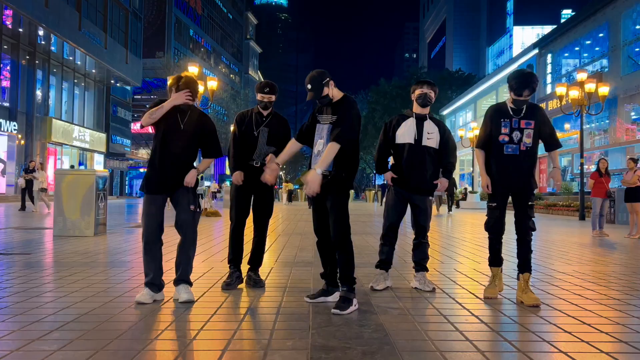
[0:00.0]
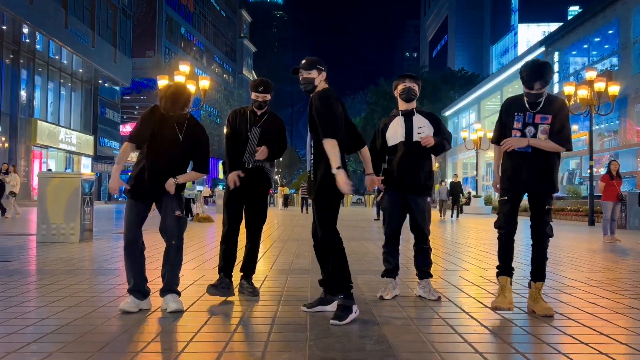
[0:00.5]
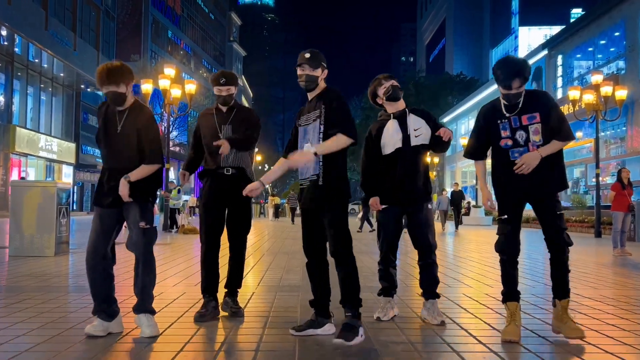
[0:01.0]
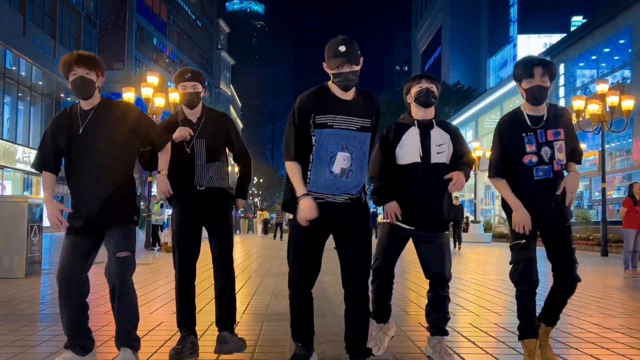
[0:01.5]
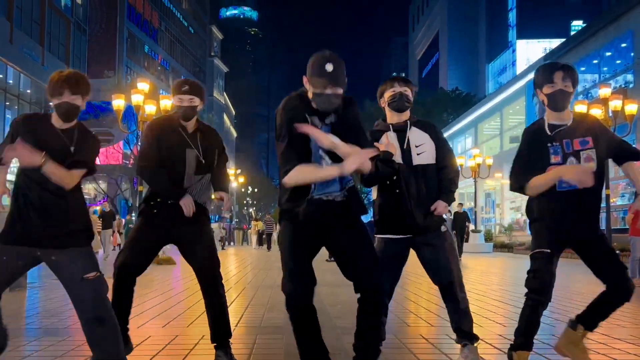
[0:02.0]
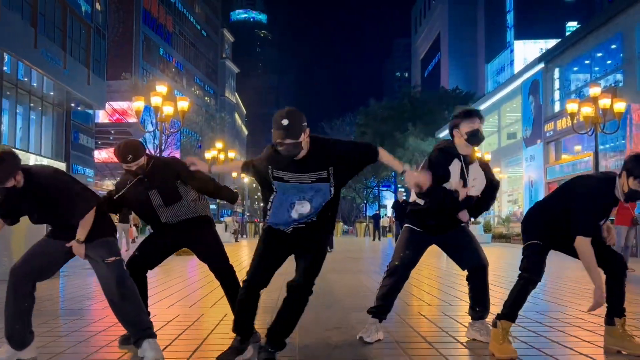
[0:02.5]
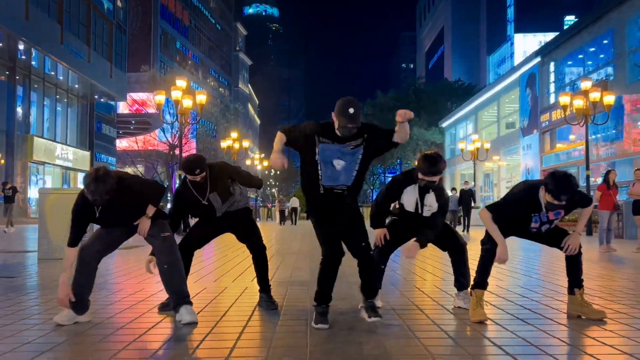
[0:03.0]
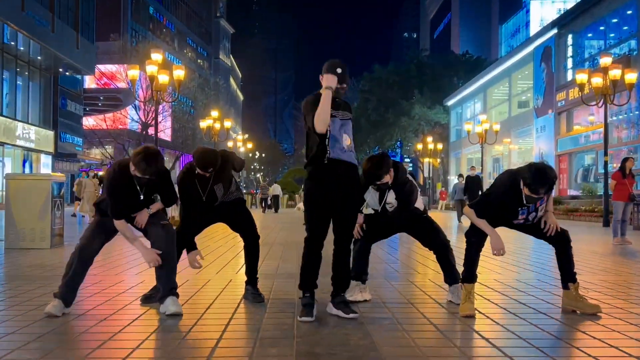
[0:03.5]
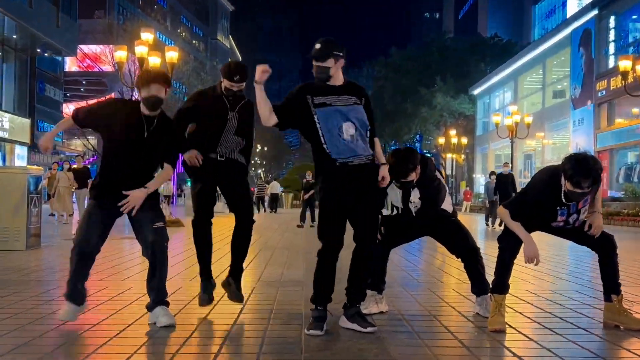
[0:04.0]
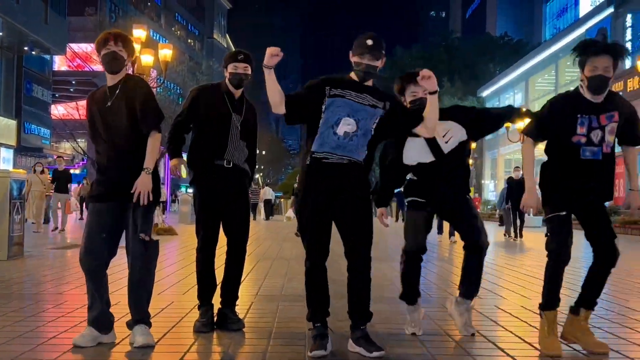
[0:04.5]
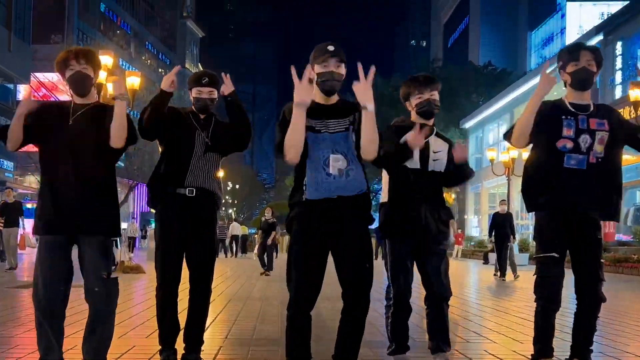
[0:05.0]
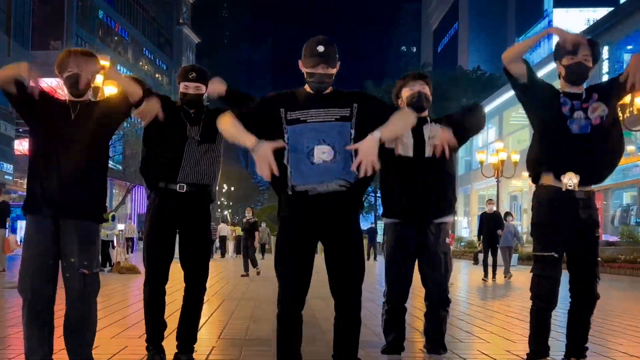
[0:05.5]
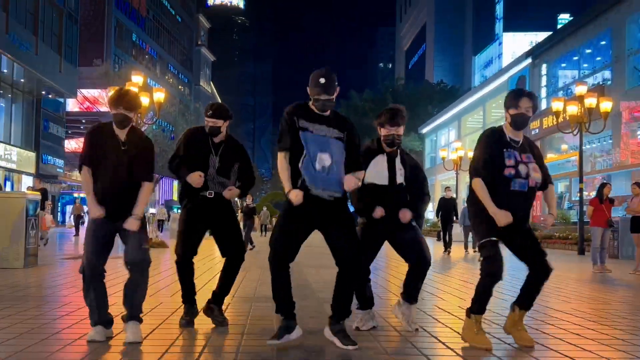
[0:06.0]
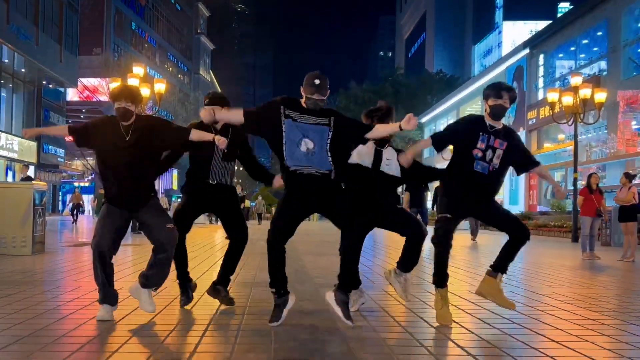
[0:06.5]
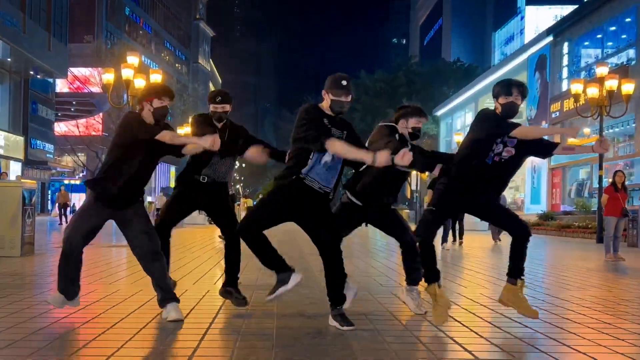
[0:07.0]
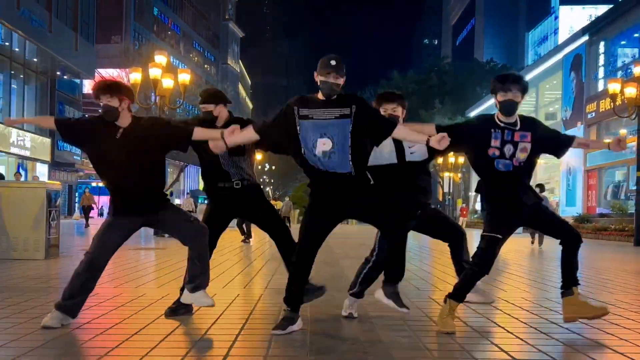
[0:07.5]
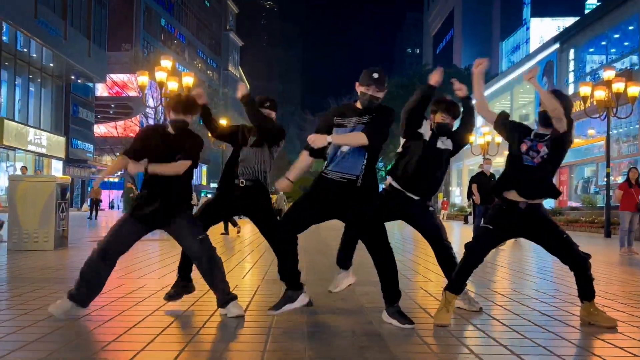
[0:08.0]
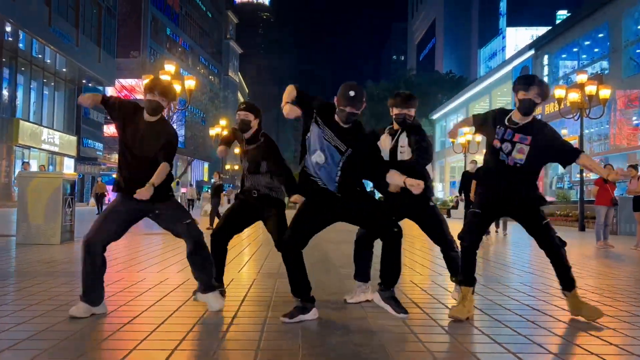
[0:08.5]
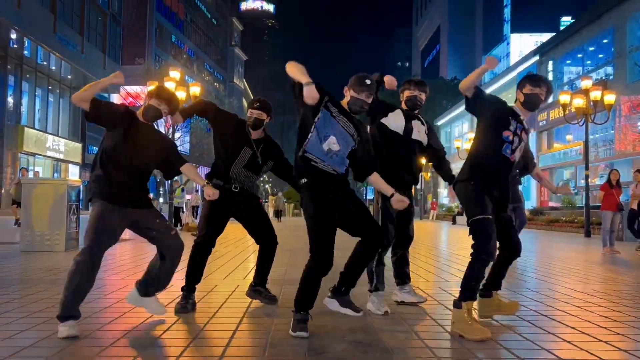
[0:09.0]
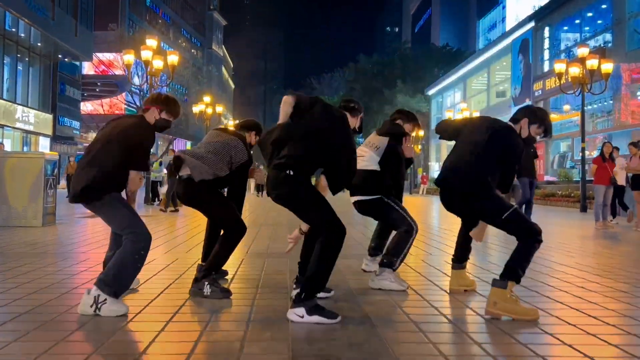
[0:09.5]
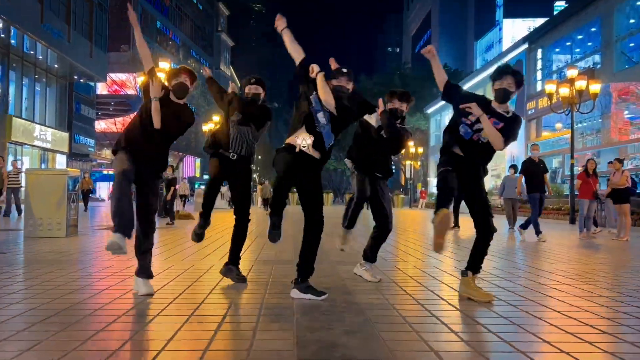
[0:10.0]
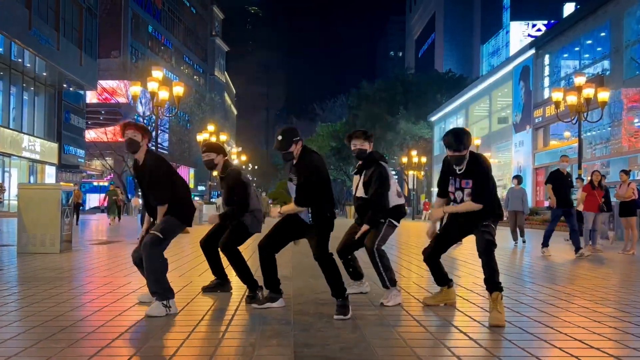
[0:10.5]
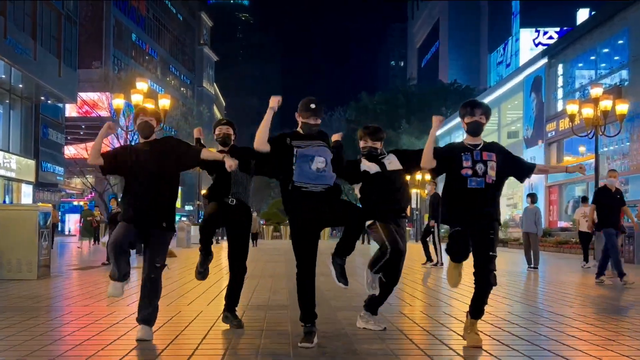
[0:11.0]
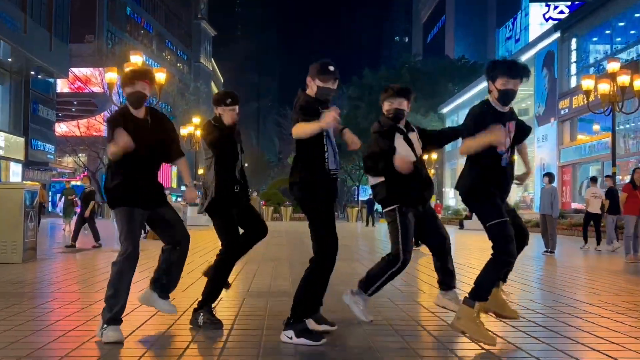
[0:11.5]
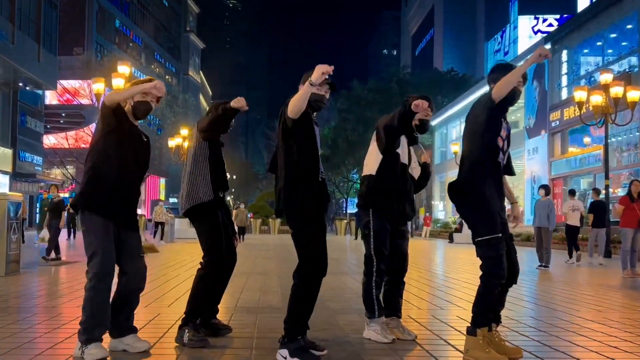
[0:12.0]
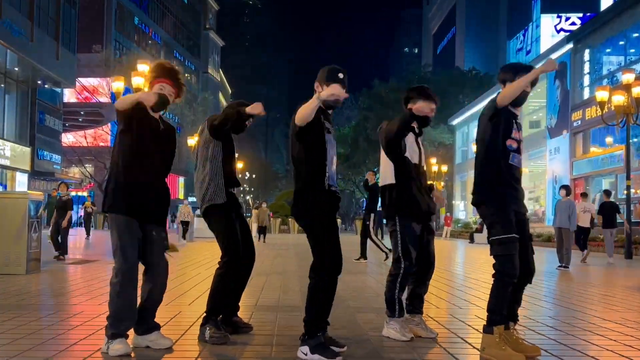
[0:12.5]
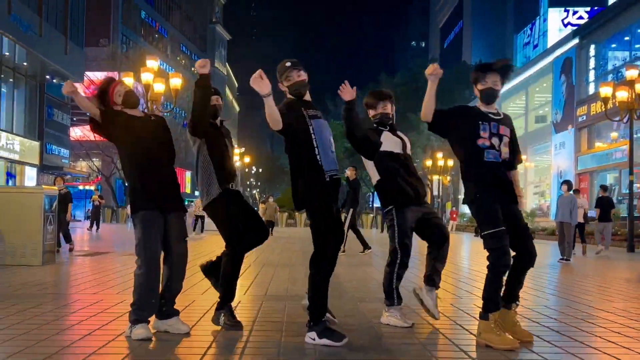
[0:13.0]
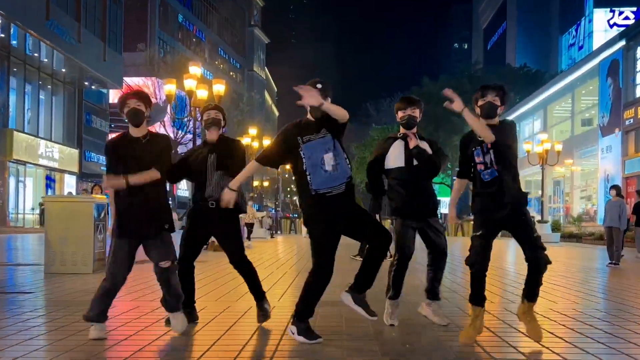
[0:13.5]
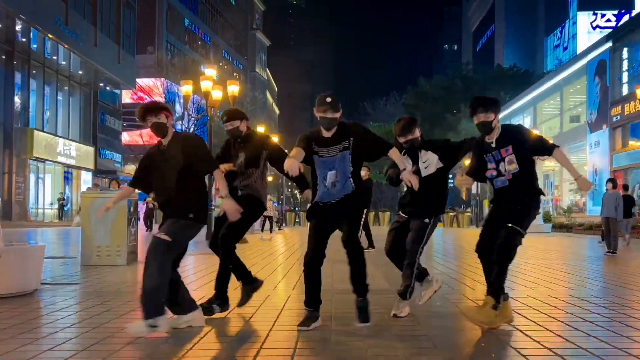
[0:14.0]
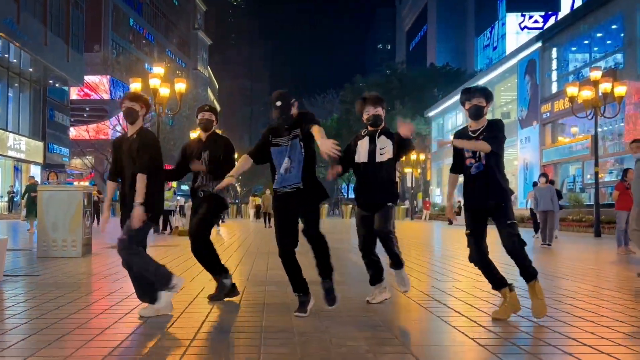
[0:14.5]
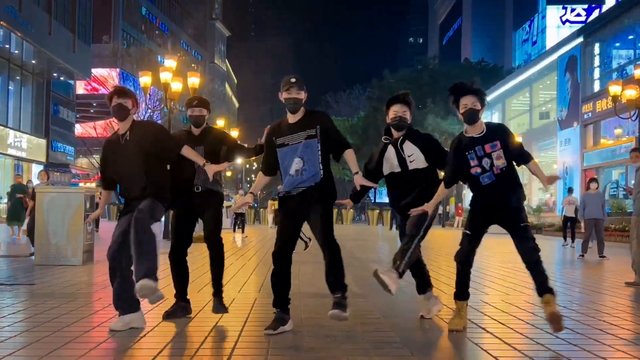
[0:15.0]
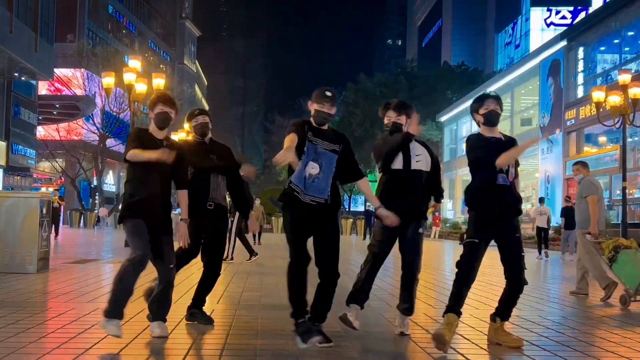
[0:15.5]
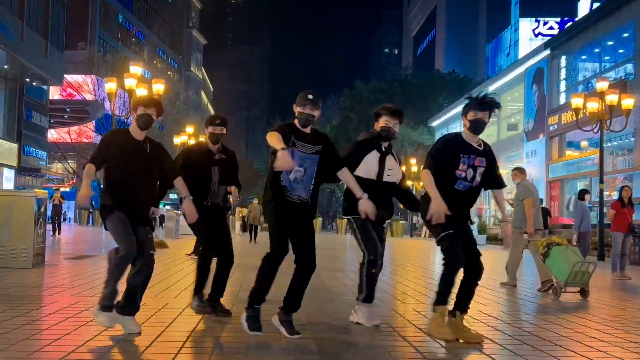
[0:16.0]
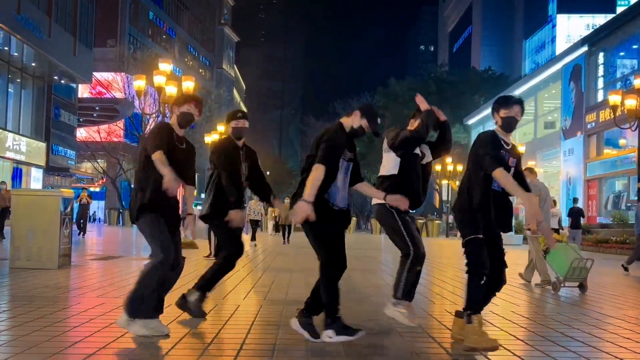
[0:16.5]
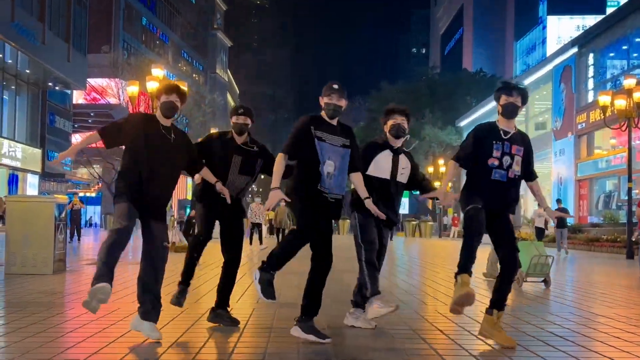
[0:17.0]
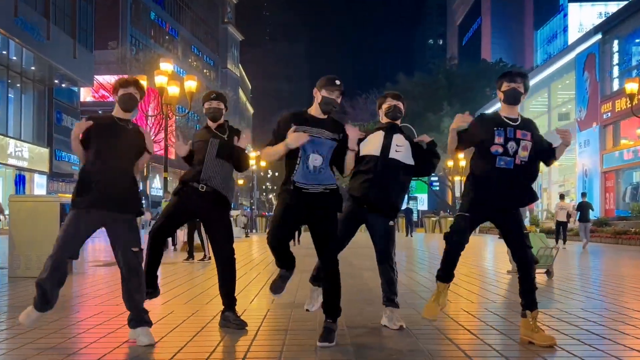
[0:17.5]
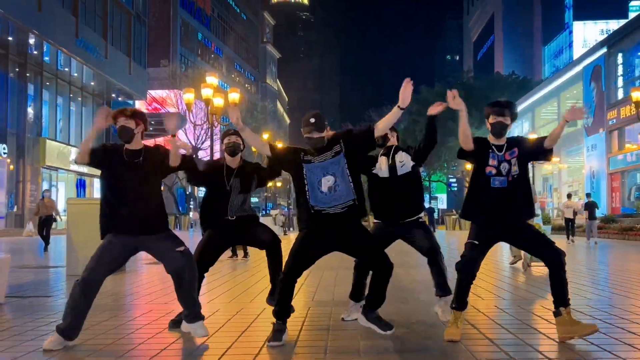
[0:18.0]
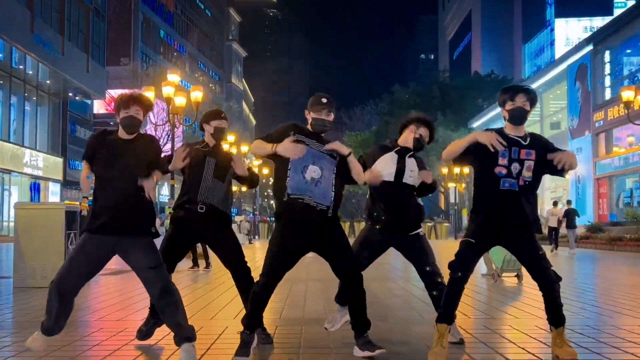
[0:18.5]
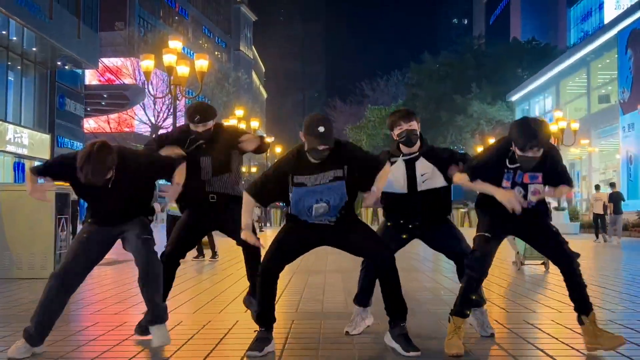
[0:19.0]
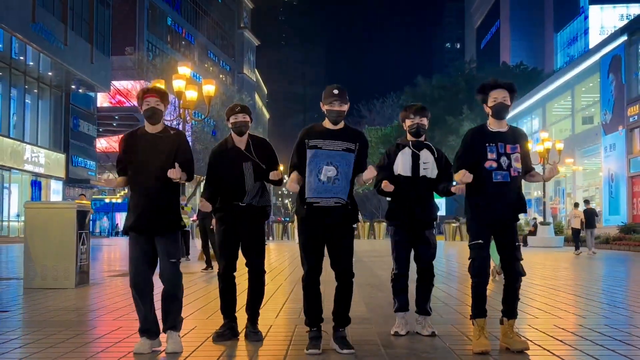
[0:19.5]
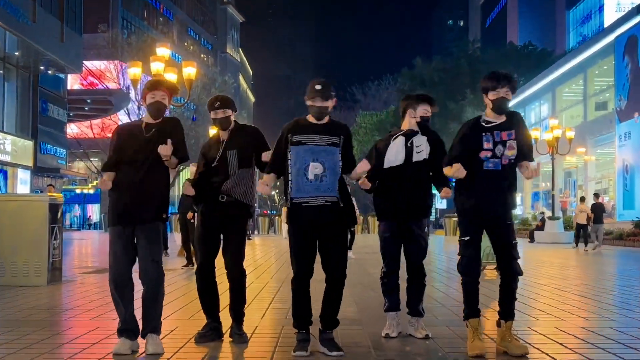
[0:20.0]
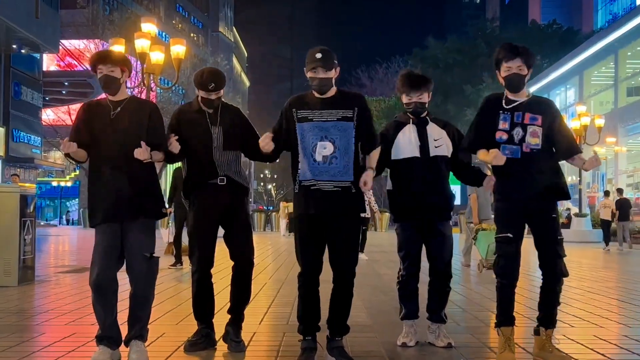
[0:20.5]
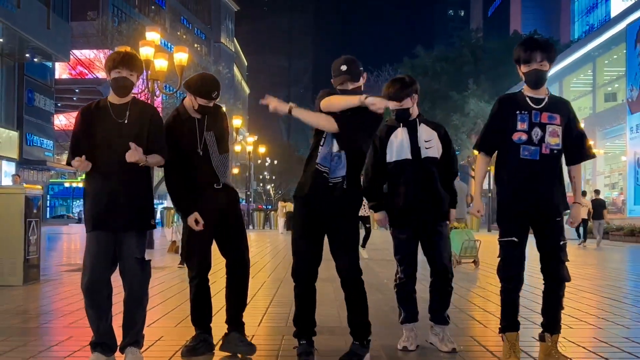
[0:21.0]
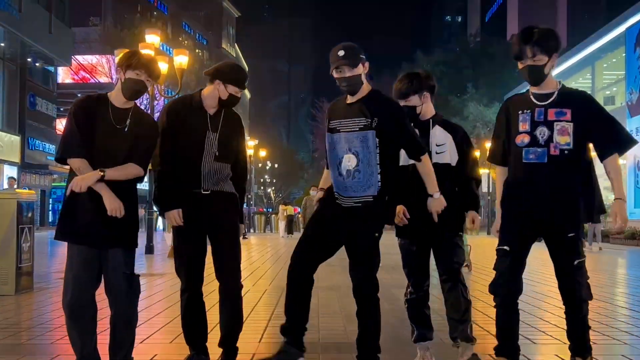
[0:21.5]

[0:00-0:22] What appears to be a Korean boy band, seemingly five young men, dances in sync at night in what looks like a busy shopping center. They wear mostly black outfits, though not completely black: some wear T-shirts with screen-printed designs, and one appears to be wearing a jacket with a sort of white color blocking on the breast and back. All of them wear face masks. Their dance routine is closely synchronized and precisely timed. Around them are many buildings, all lit up with neon lights and street lights, and many people walk beside them; some people stop to watch. The night setting is very dark blue, and the ground beneath the dancers is orange and yellow, some sort of tile or pavers reflecting the neon and ambient light around it.